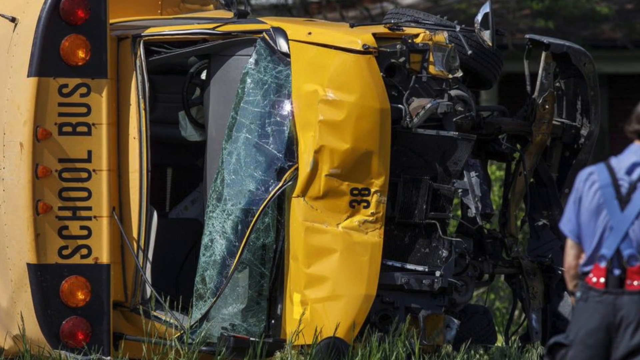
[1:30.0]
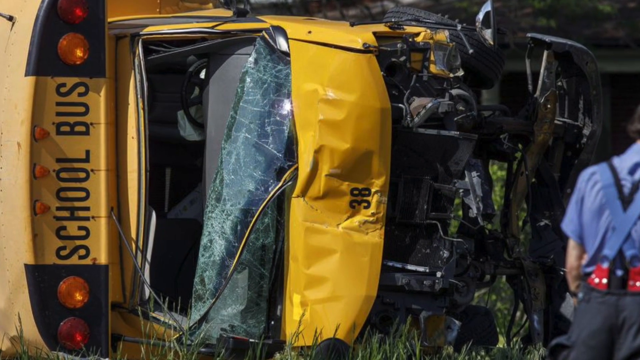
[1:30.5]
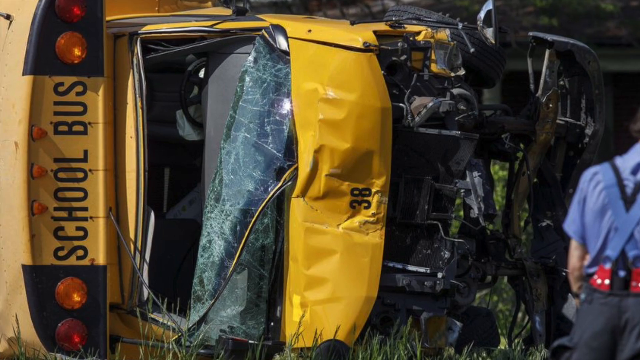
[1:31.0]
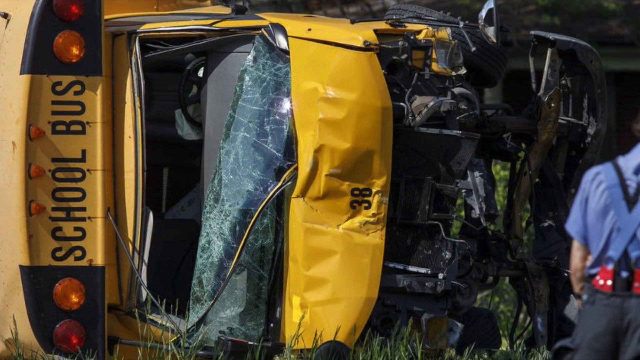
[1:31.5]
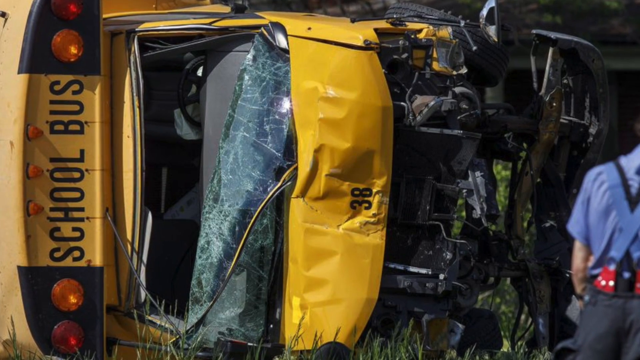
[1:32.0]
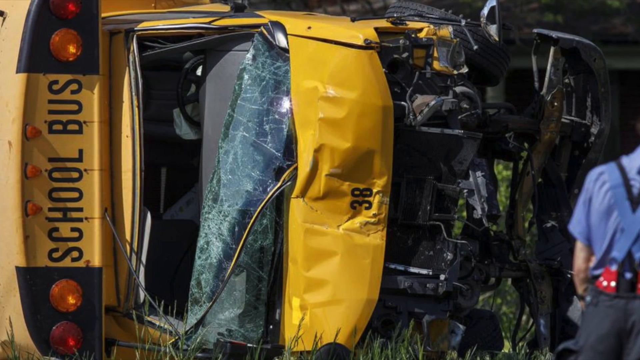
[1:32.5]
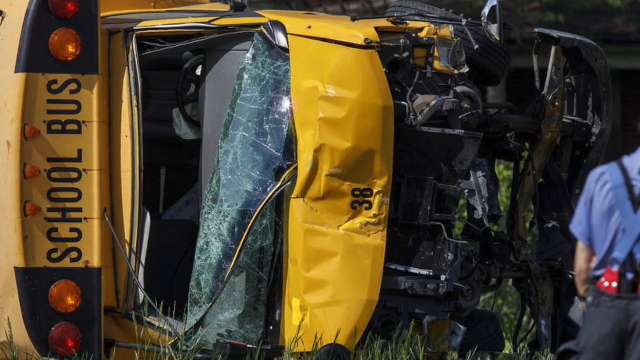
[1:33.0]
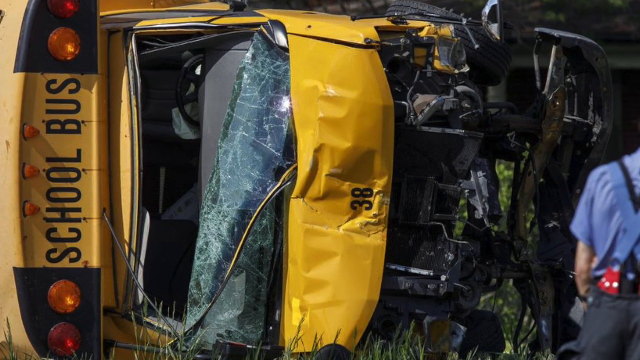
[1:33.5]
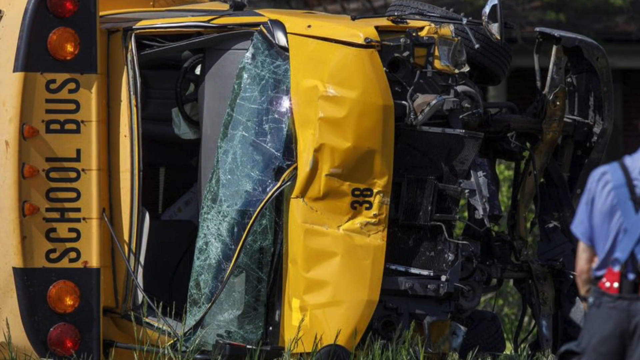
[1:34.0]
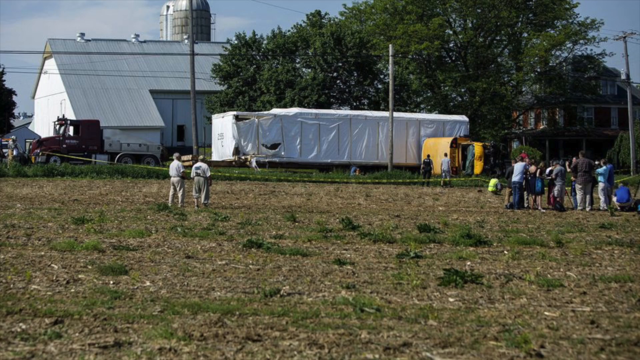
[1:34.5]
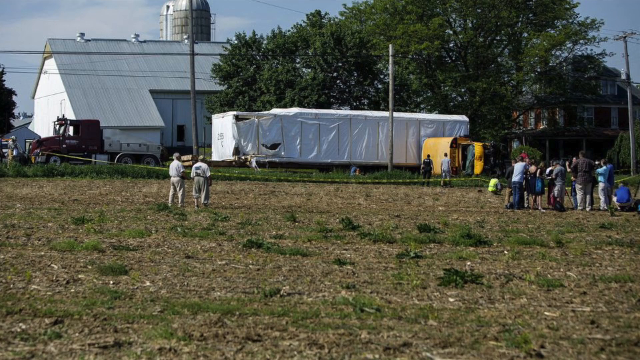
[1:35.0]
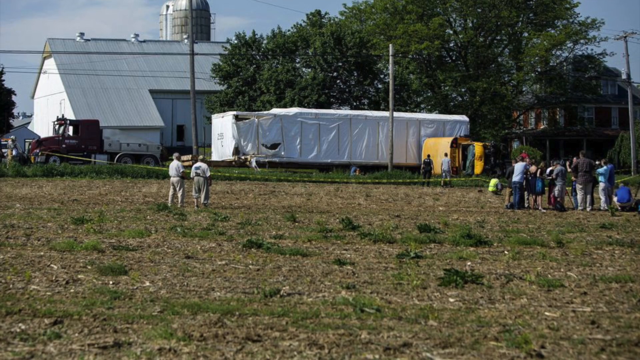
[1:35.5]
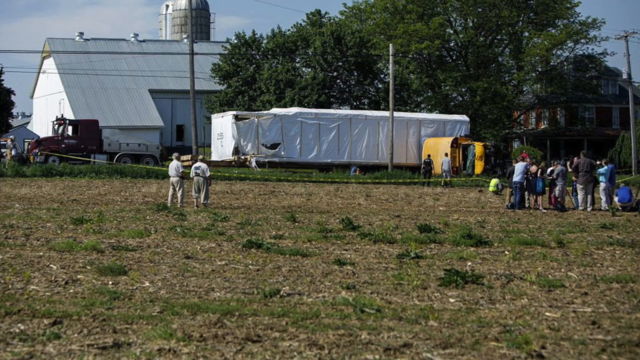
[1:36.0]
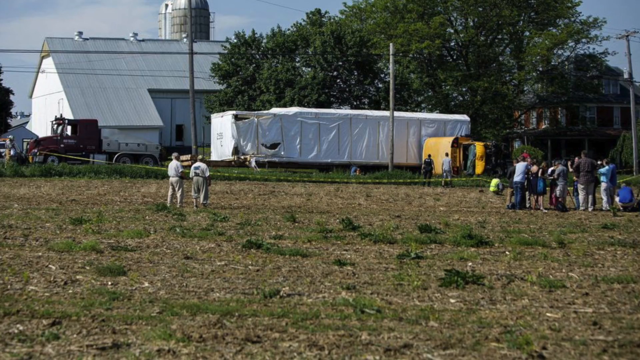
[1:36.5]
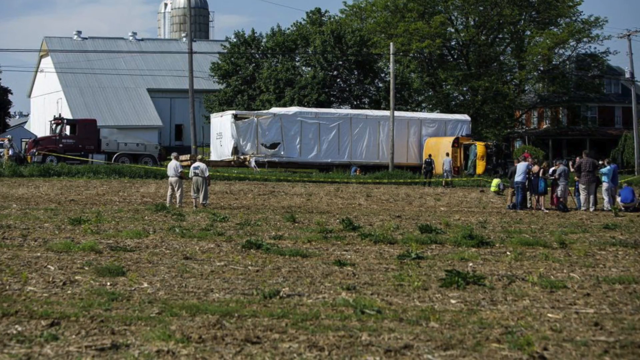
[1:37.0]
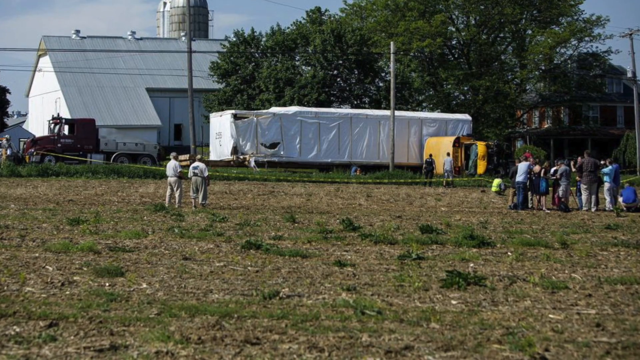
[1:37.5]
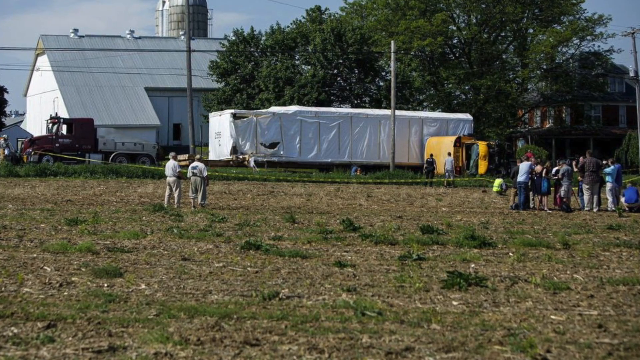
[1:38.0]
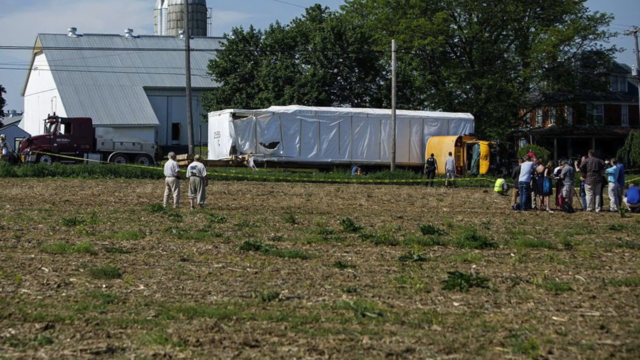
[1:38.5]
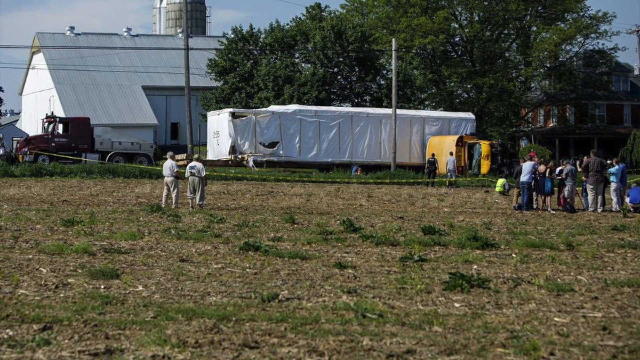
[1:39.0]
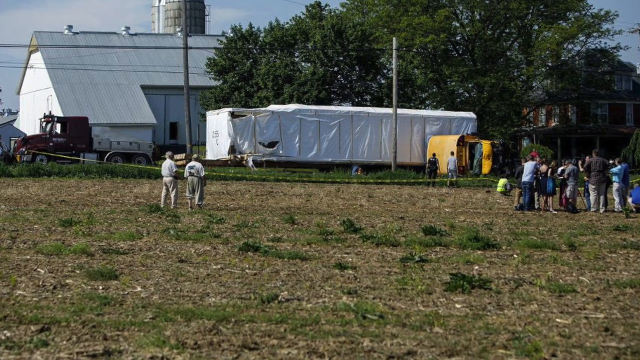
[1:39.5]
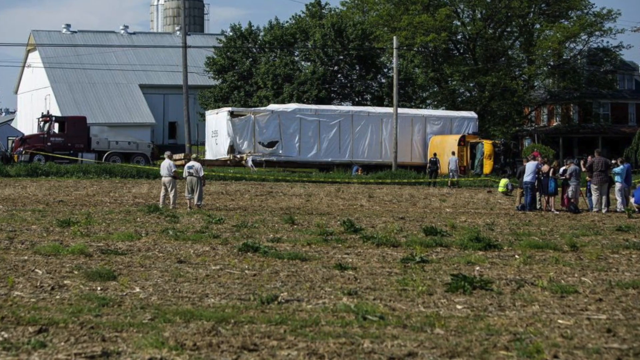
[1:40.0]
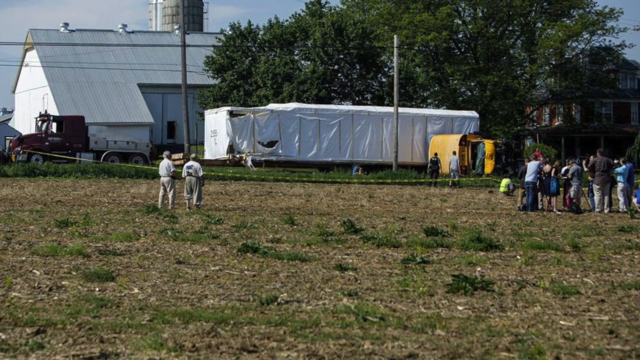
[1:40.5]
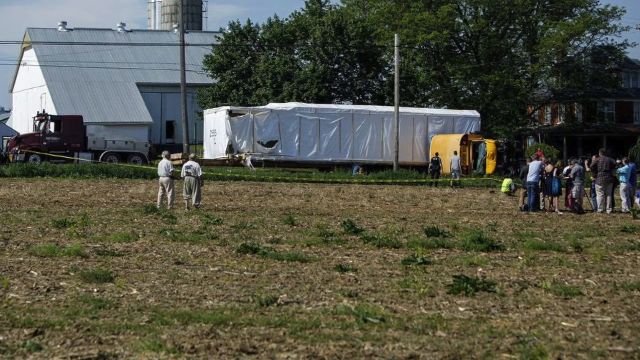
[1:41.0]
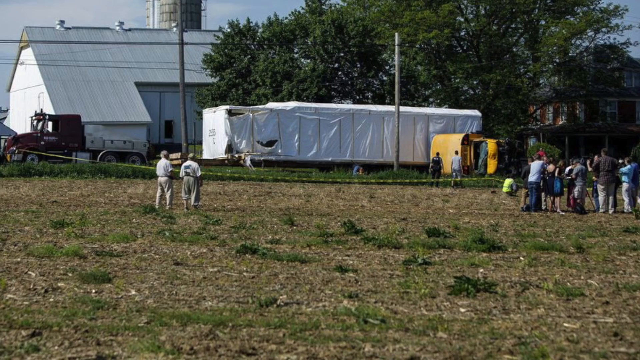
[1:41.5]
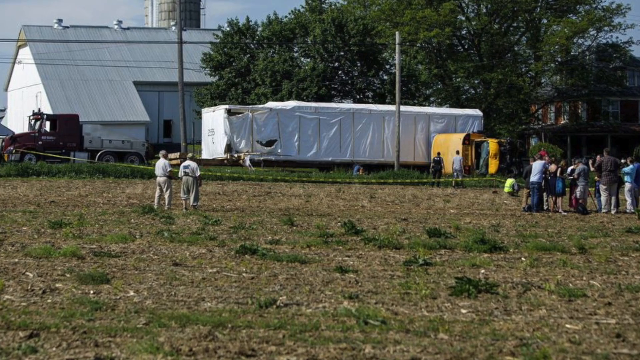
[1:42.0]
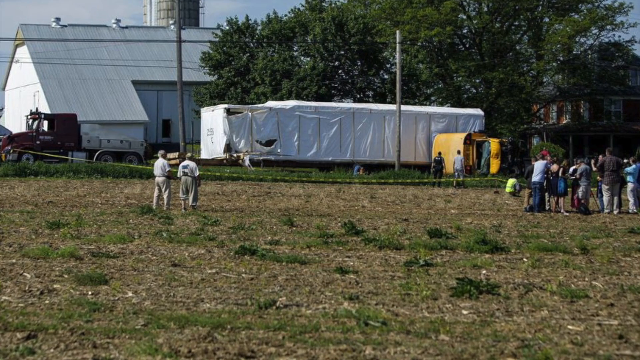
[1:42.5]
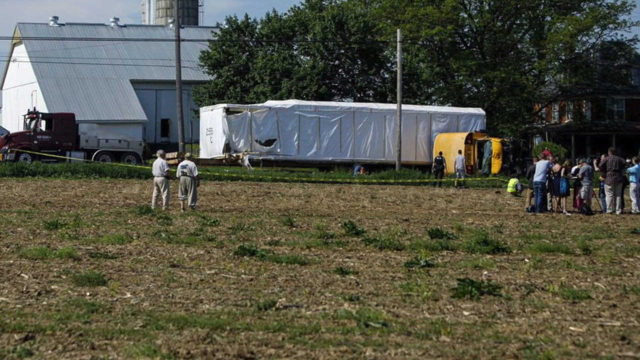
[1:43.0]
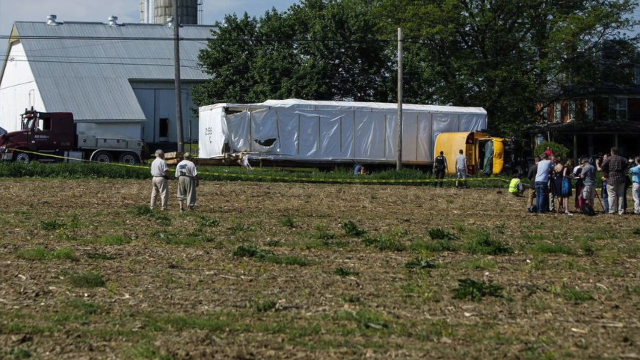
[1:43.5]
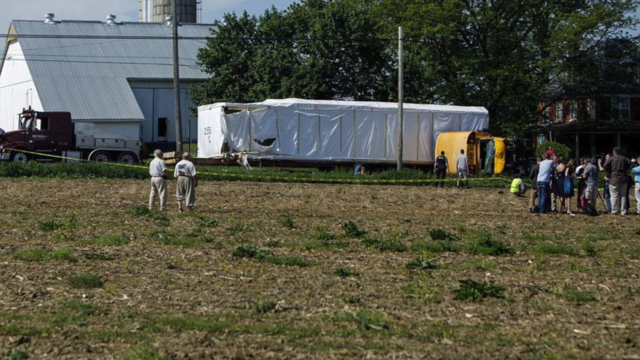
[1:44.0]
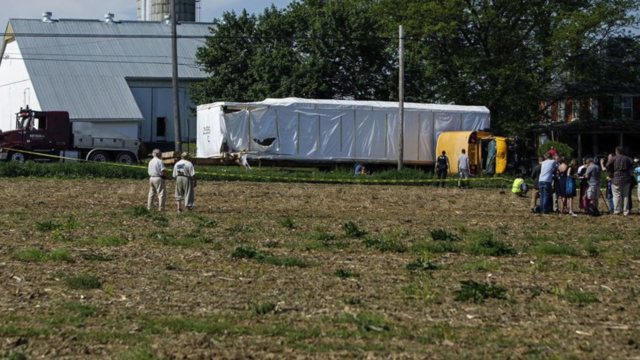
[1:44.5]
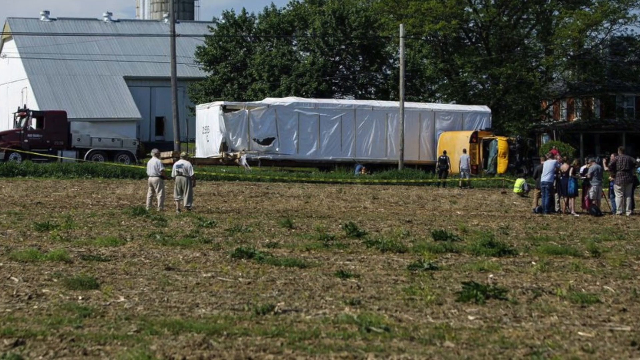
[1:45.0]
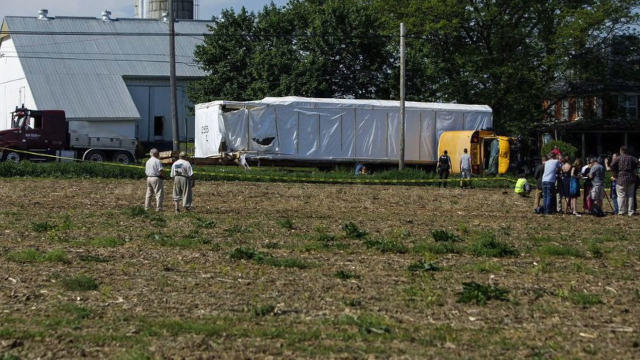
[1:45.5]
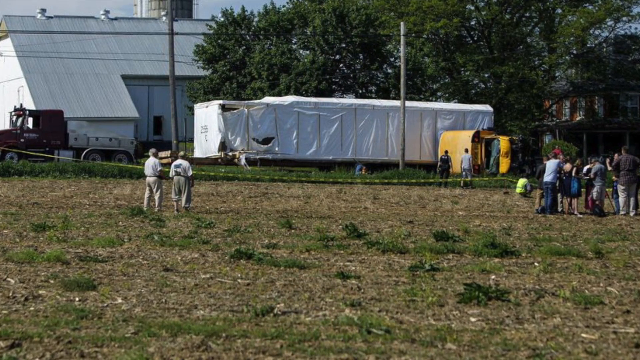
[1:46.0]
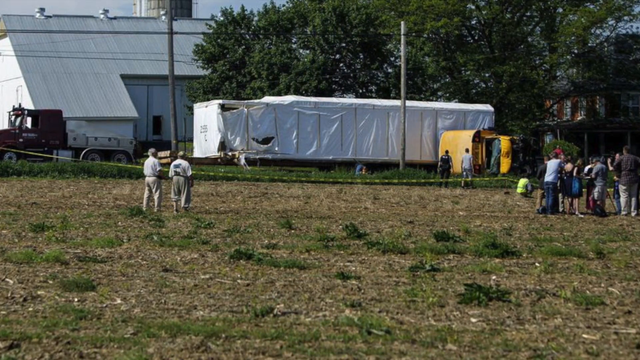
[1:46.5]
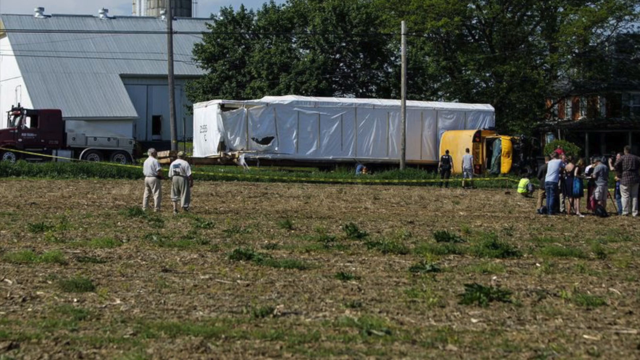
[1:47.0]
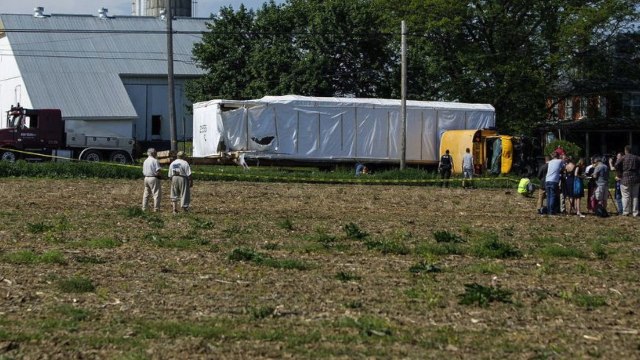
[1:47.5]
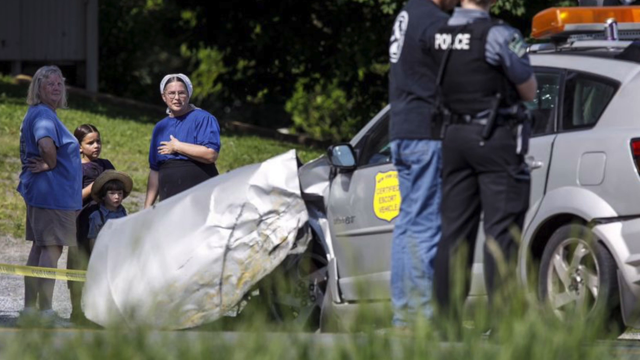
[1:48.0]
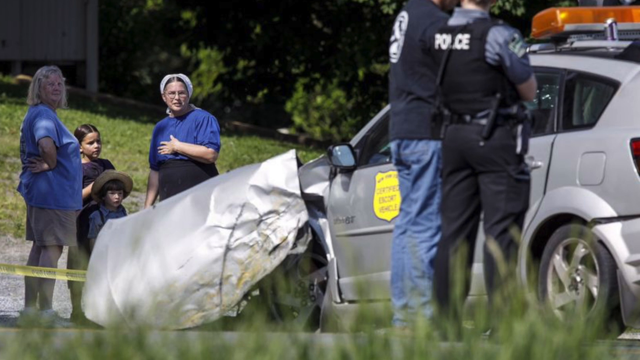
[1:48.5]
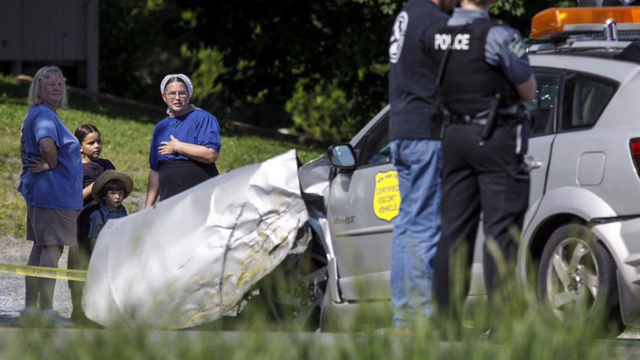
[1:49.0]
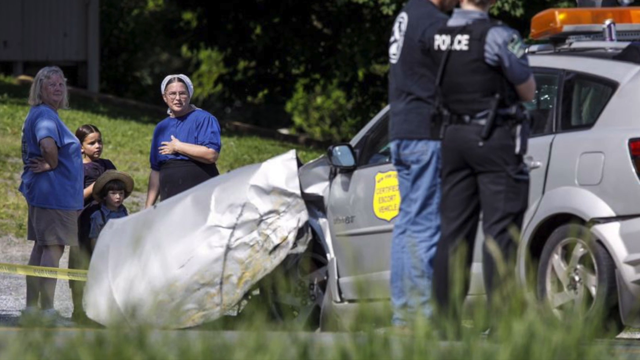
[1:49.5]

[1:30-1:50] The overturned school bus is shown, and the view closes in a little on it. It shifts to a picture from a distance: in the background is what looks like a grain silo and a big grain storage area, plus some kind of white vehicle; the overturned bus is kind of in the mid-ground; a bunch of people on the center right in the foreground are taking pictures, while two people on the center toward the left are just standing there. A telephone pole stands in the middle. The view pans into that and then goes to the white or silver car in front, which shows a lot of damage to its front end and body, with some kind of yellow badge on the front door that says something. People, including a child, are talking in front of the car, and police are at the back of the silver car.